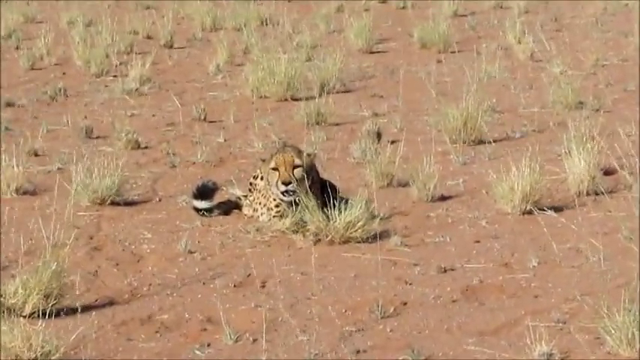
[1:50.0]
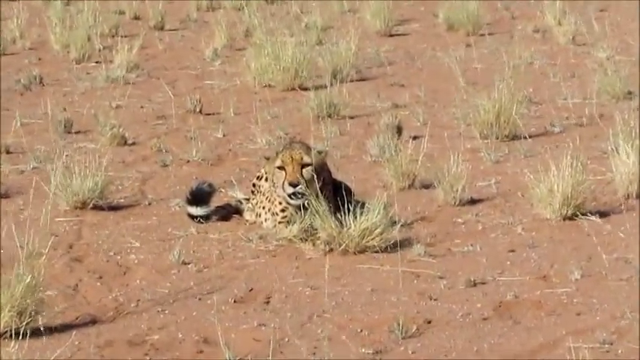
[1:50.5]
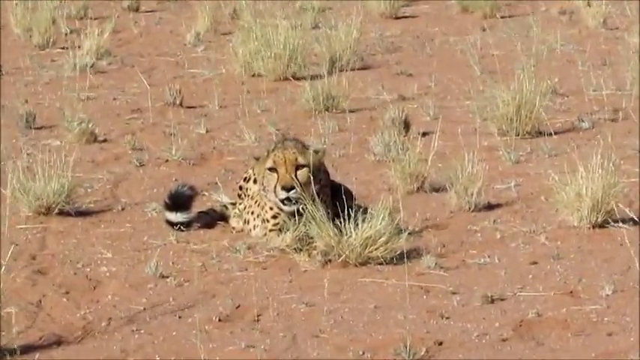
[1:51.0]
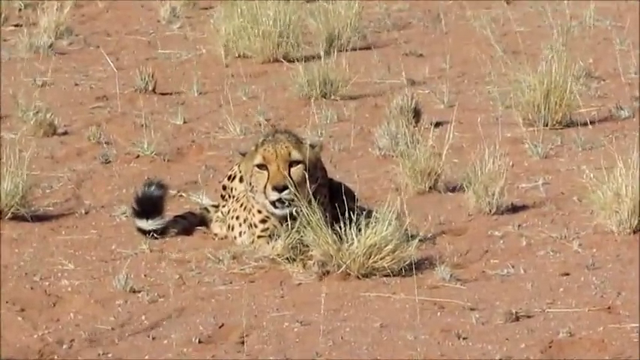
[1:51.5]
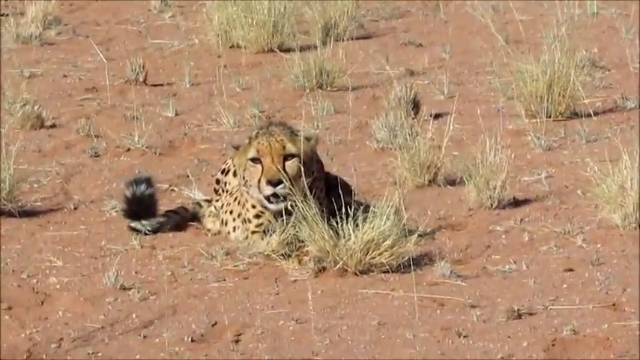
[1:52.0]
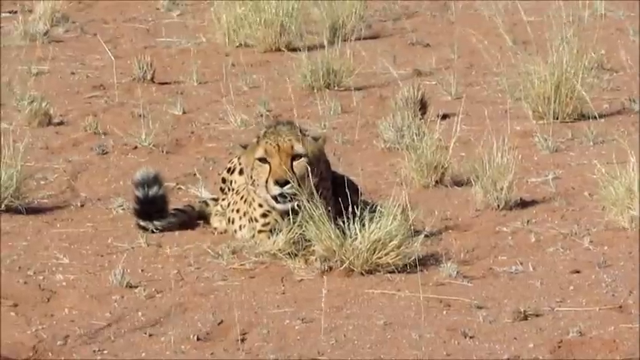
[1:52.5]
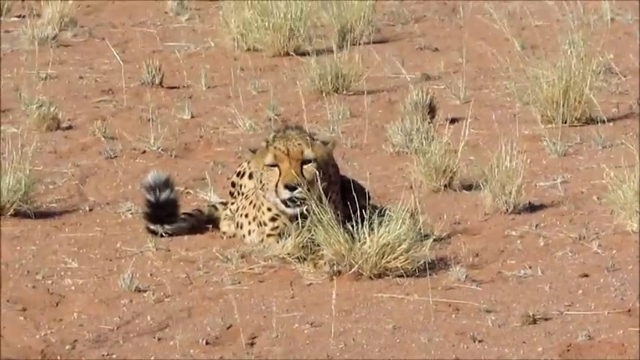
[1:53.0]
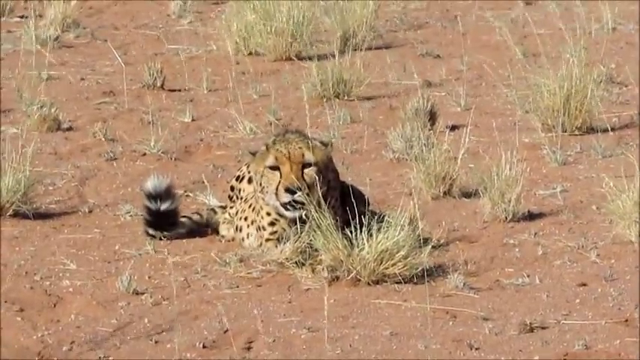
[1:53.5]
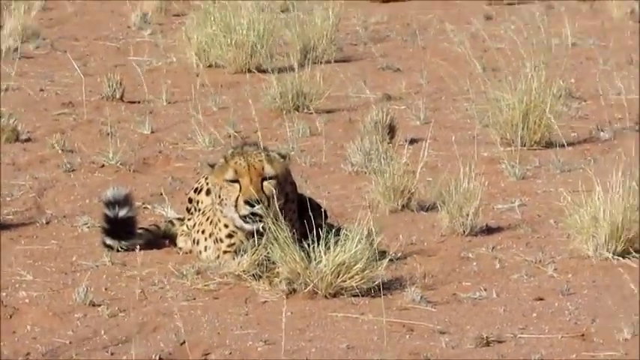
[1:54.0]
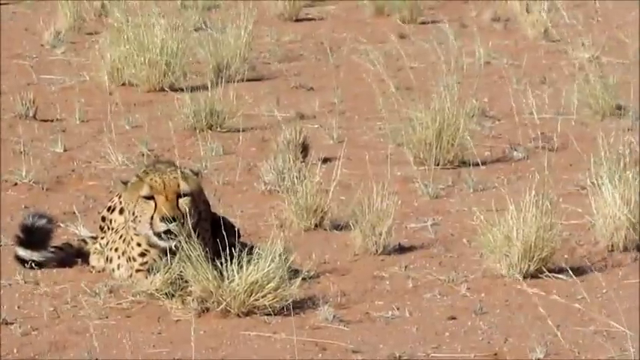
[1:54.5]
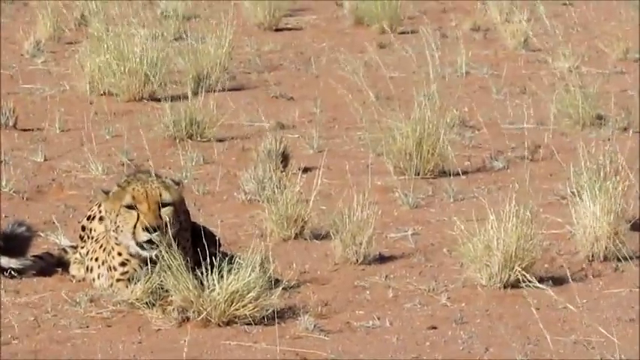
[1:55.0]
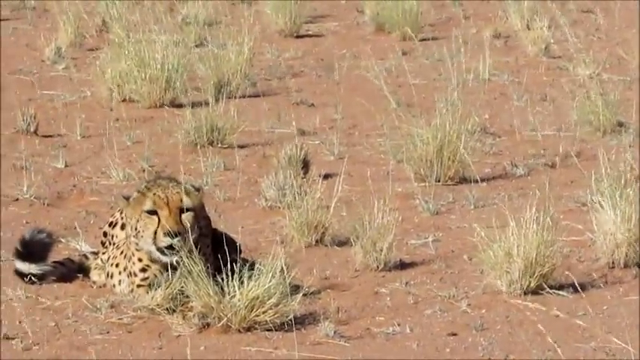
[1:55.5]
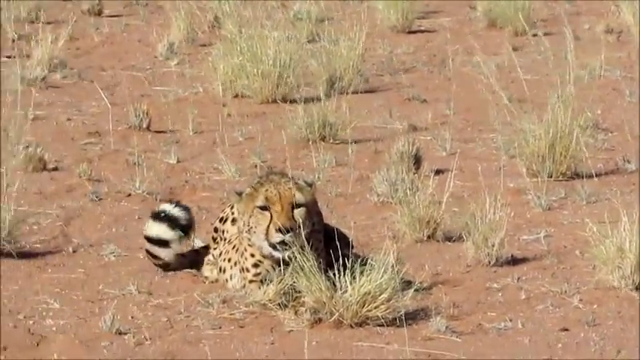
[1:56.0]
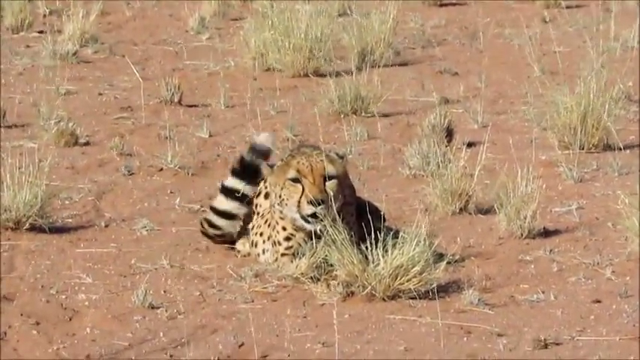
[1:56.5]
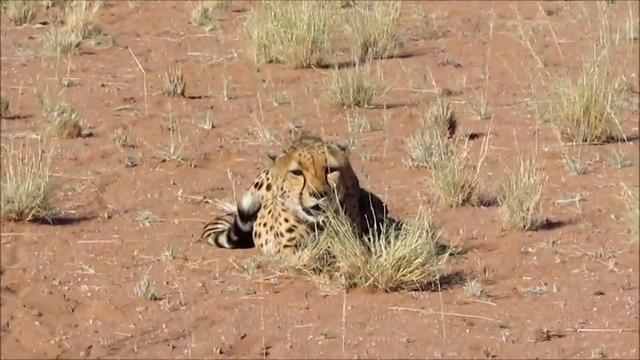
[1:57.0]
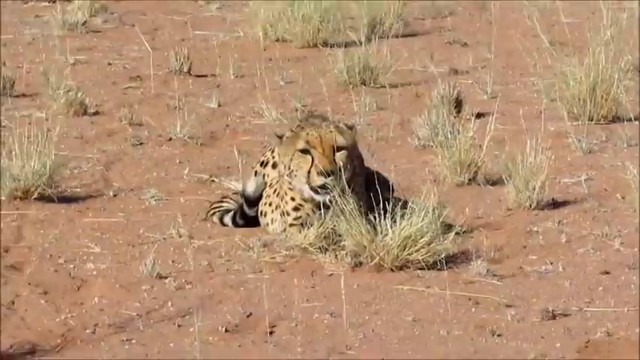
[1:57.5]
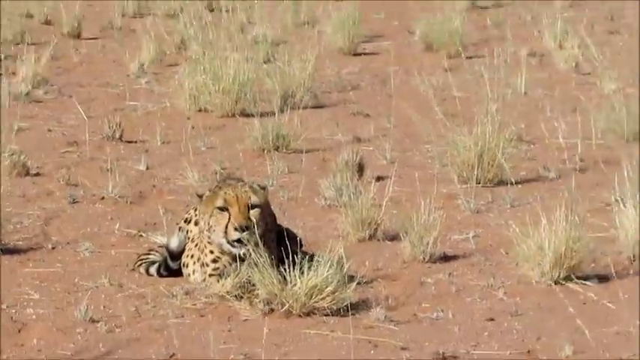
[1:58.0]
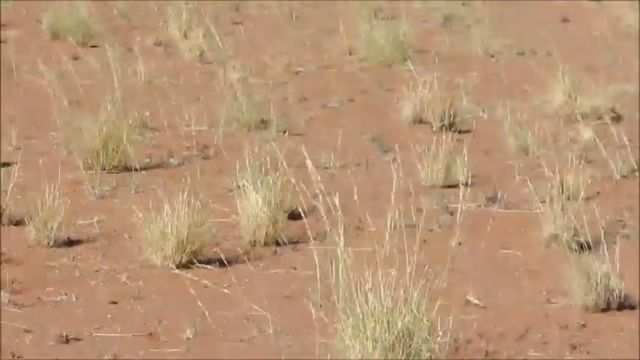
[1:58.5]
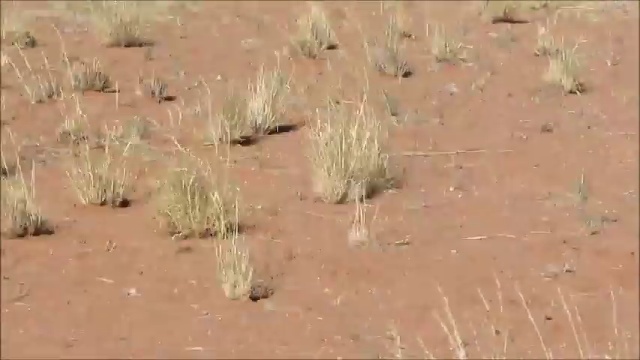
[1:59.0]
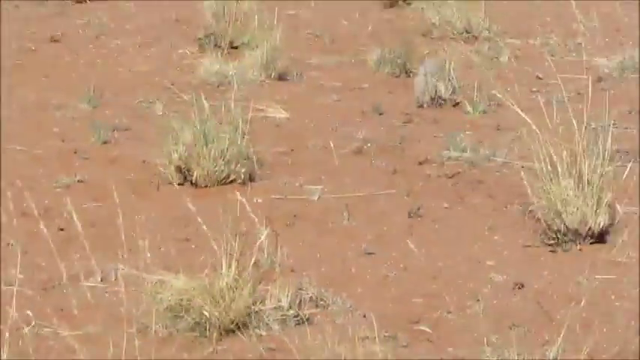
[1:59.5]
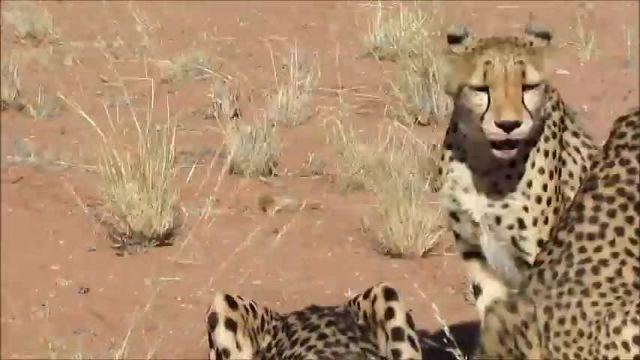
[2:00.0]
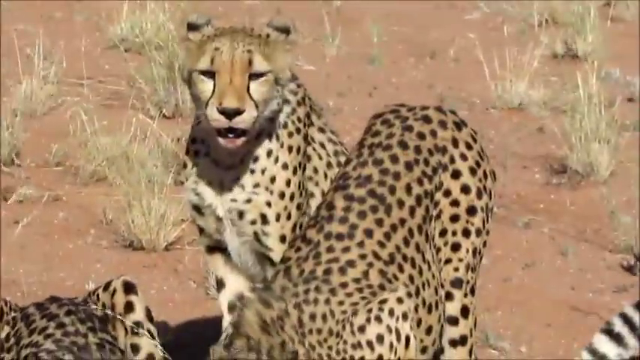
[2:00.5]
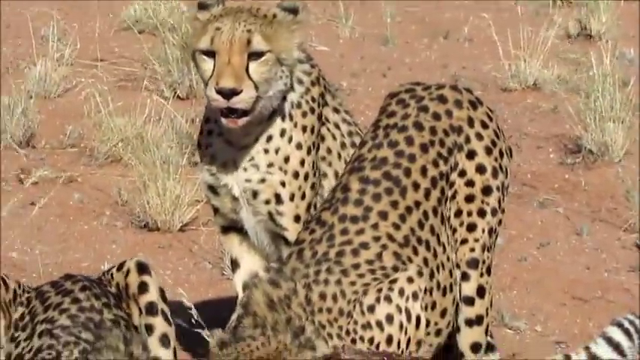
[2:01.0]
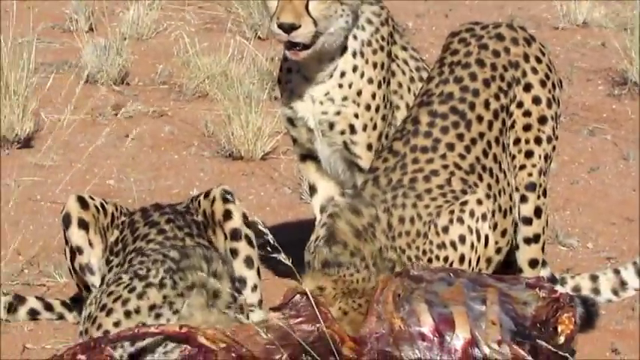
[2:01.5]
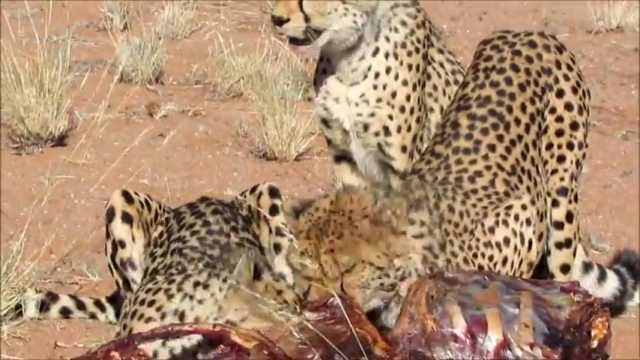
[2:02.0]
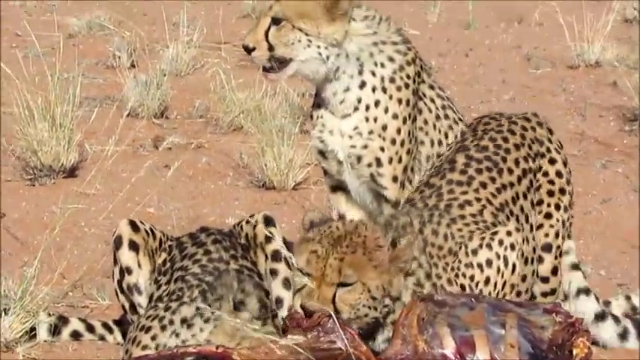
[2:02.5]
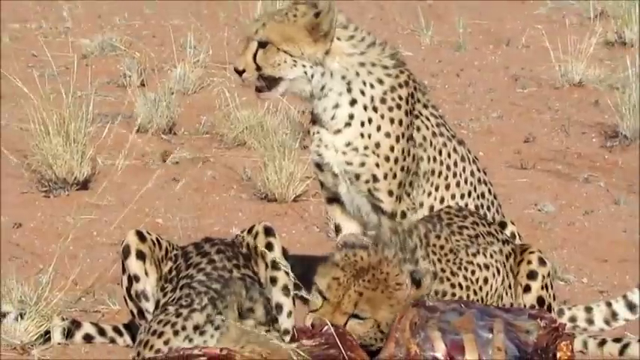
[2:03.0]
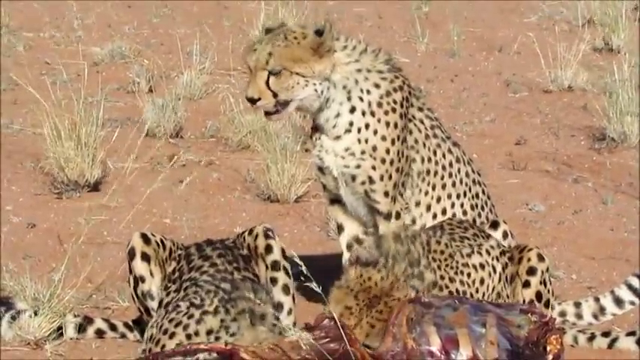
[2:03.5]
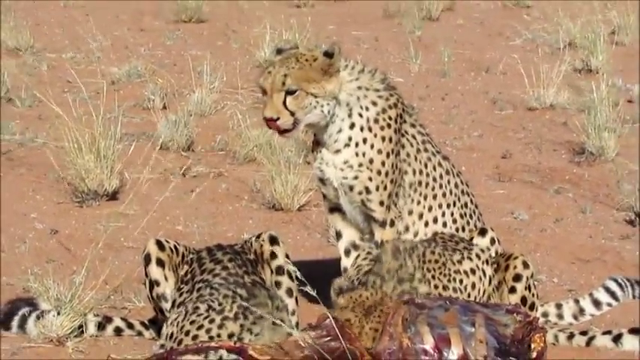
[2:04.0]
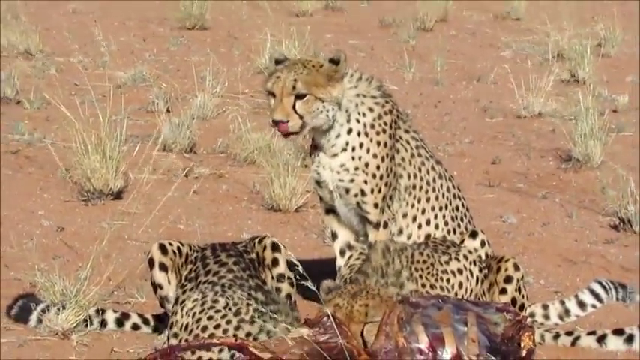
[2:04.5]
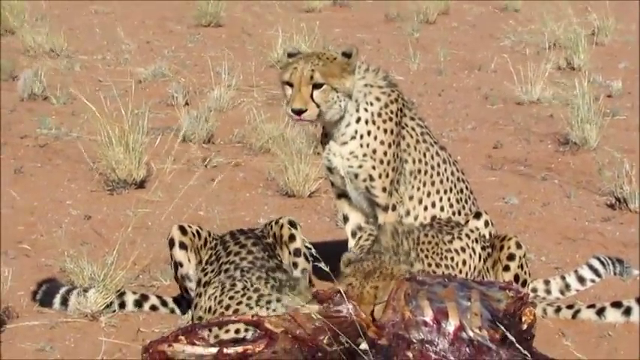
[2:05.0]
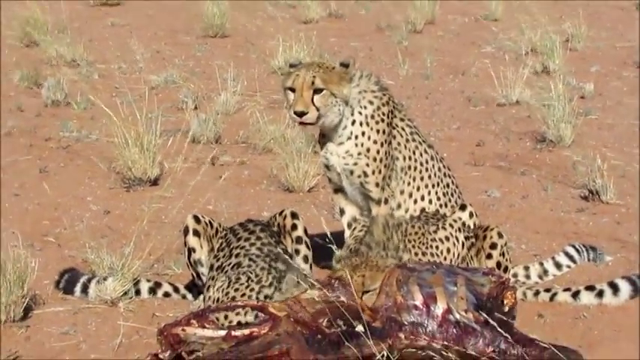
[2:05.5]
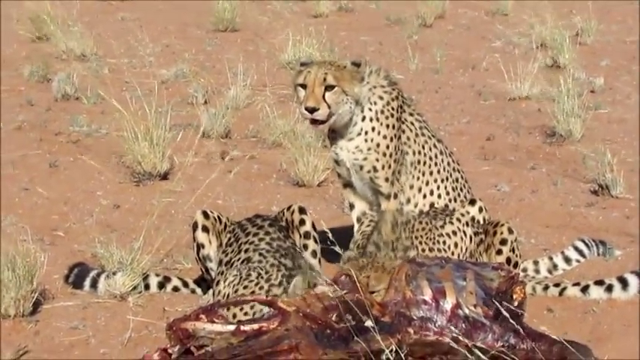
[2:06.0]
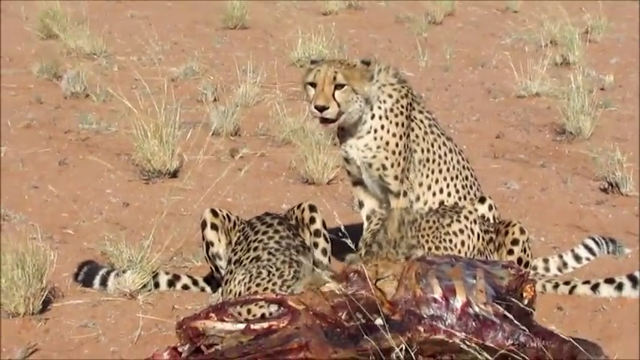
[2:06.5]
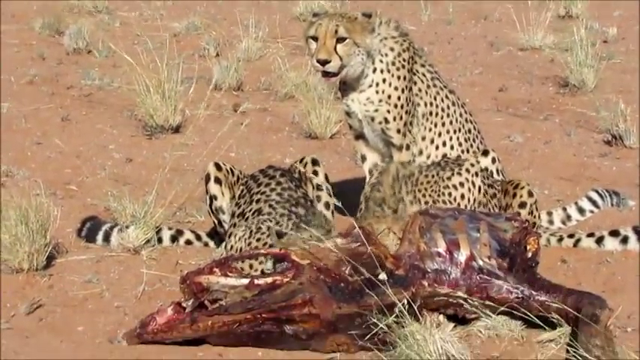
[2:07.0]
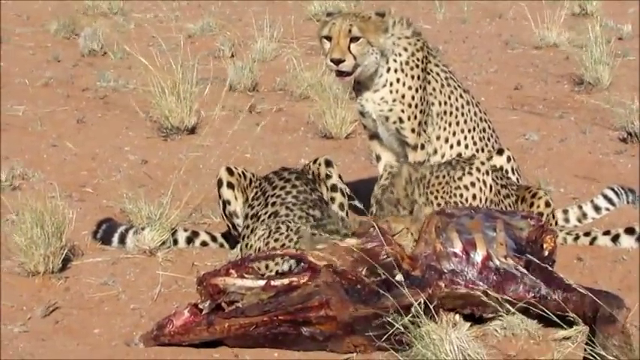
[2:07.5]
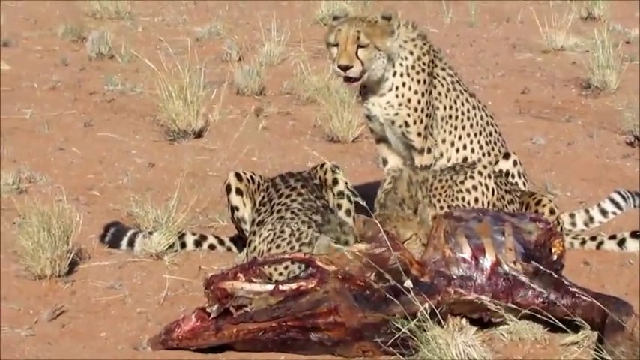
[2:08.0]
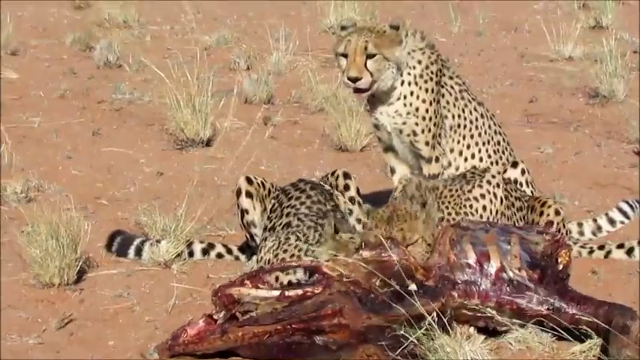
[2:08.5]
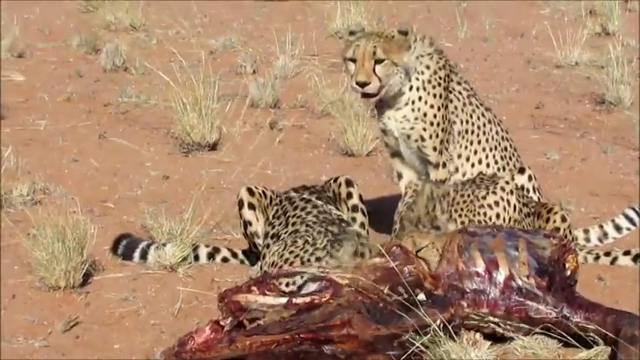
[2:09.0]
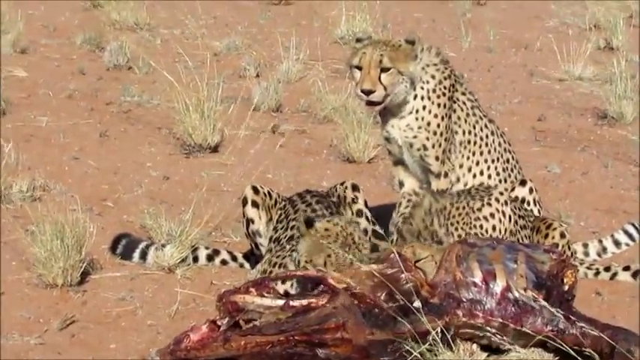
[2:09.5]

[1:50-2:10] The camera focuses on a cheetah sitting by itself. It is very relaxed, lying almost completely supine on the ground as it looks directly at the camera. The camera zooms in as little tufts of grass in the arid brushland sway in the wind, and the cheetah moves its tail slightly. It then flicks its tail once, possibly out of annoyance, and the camera turns back to the right to the original three cheetahs. The cheetah in the middle is now standing up and seems fairly disinterested in eating, while the cheetahs on the left and right stare at the animal and eat quite quickly and strongly.